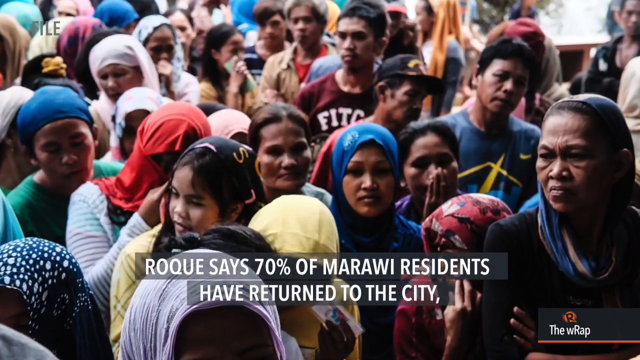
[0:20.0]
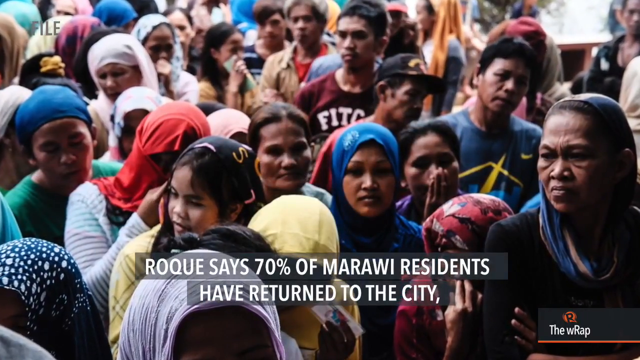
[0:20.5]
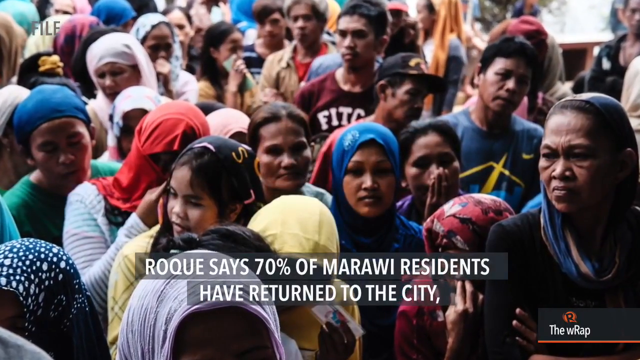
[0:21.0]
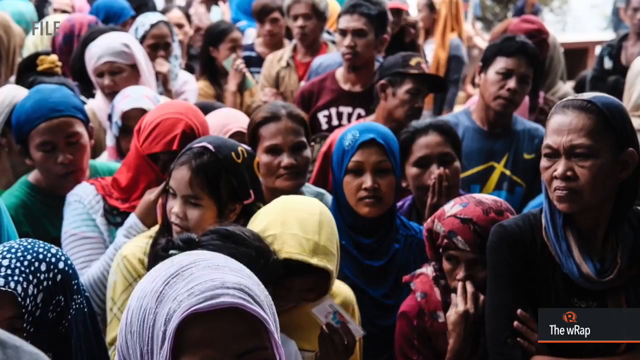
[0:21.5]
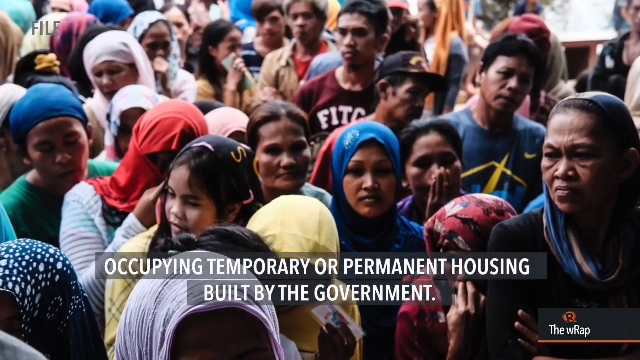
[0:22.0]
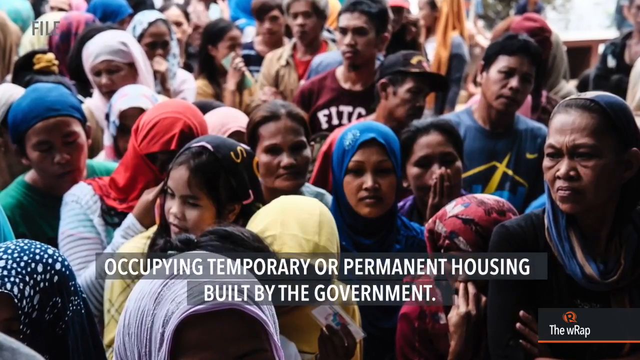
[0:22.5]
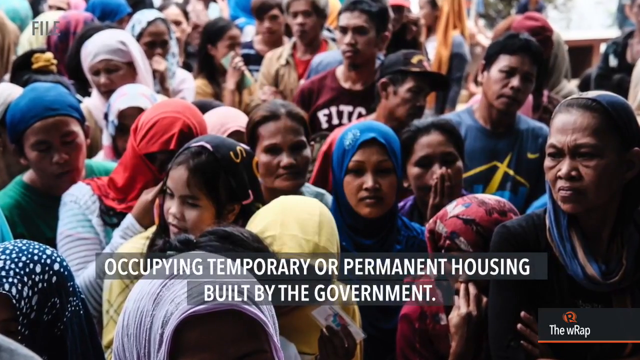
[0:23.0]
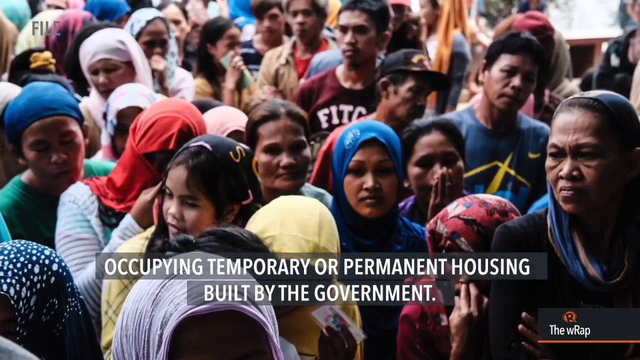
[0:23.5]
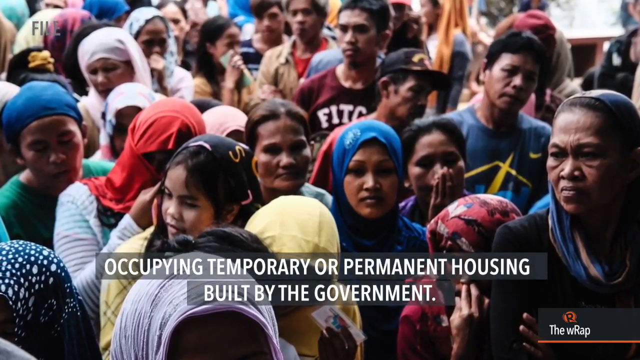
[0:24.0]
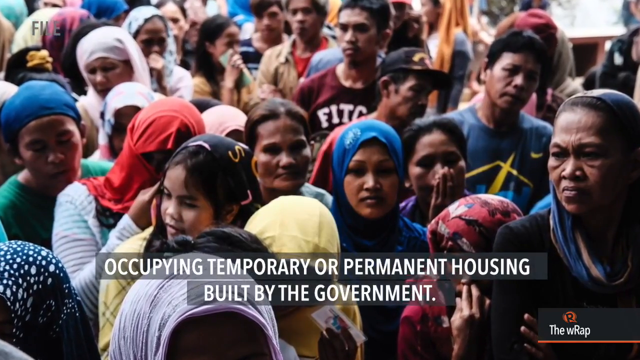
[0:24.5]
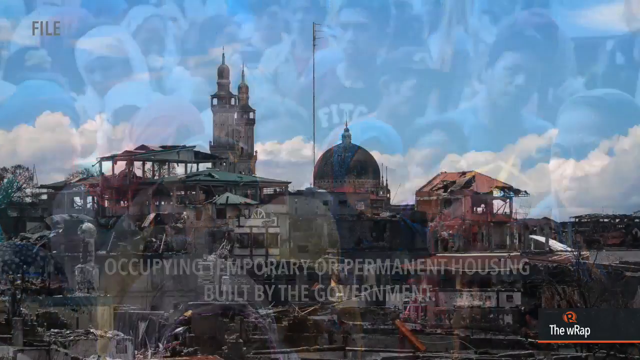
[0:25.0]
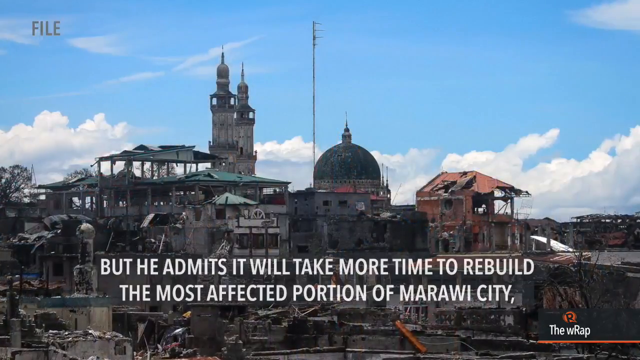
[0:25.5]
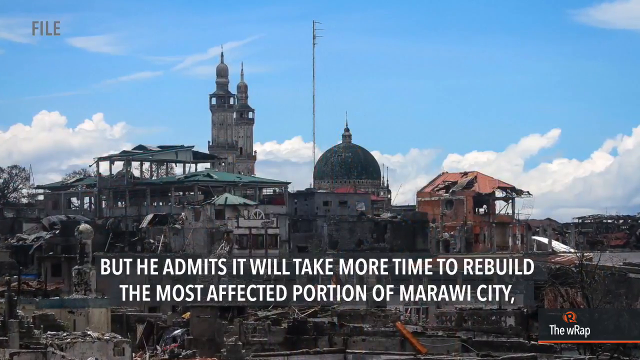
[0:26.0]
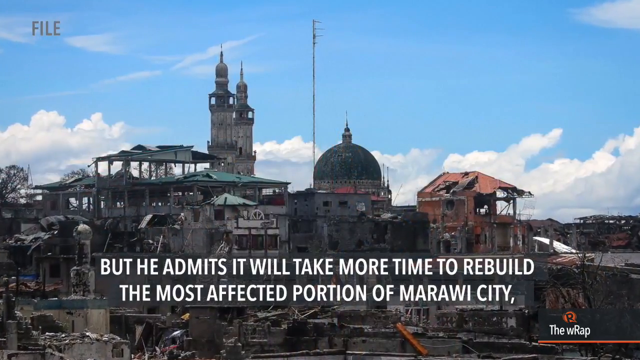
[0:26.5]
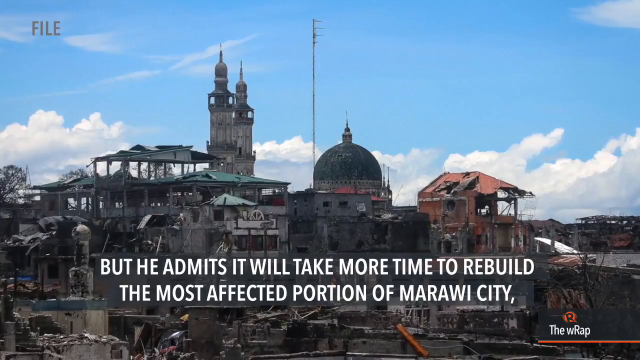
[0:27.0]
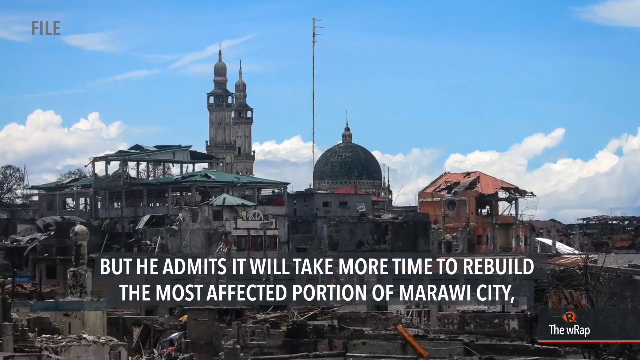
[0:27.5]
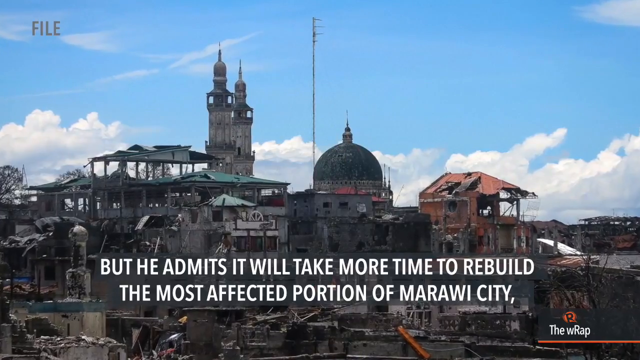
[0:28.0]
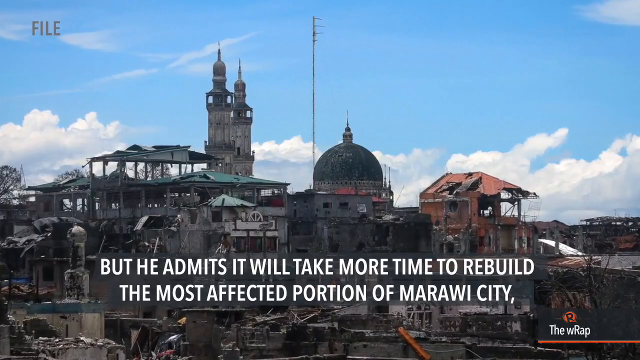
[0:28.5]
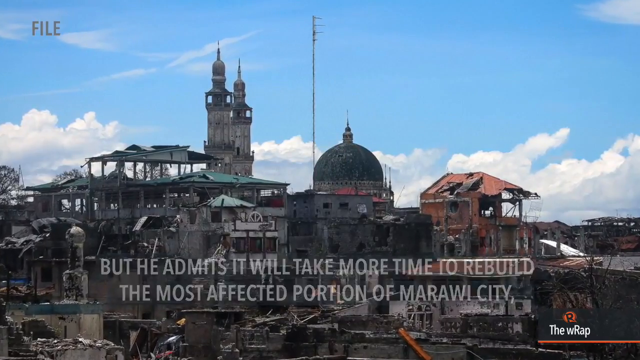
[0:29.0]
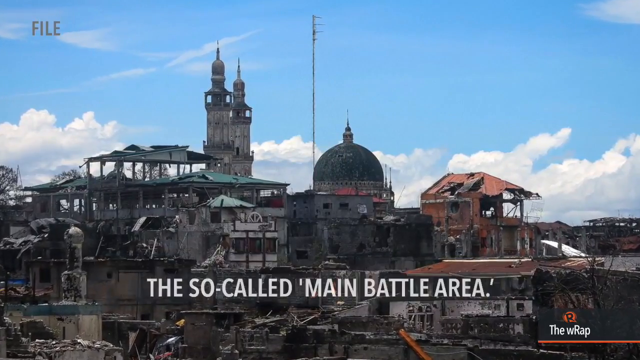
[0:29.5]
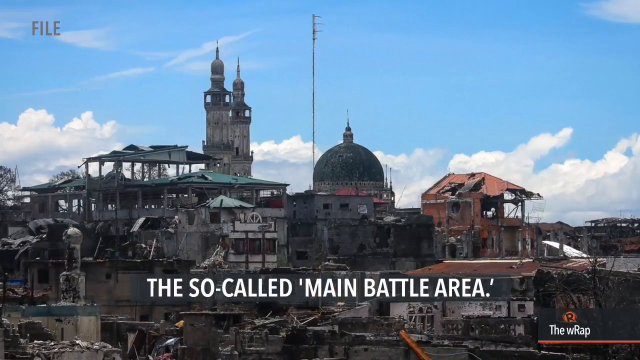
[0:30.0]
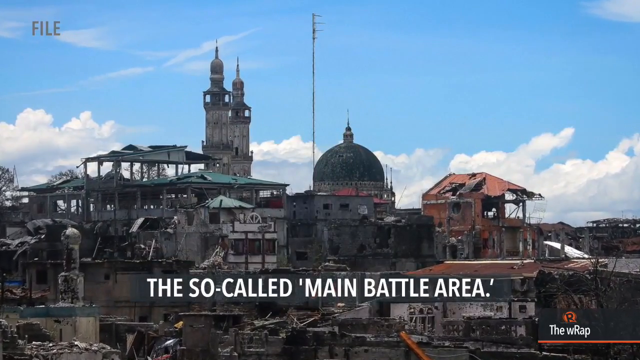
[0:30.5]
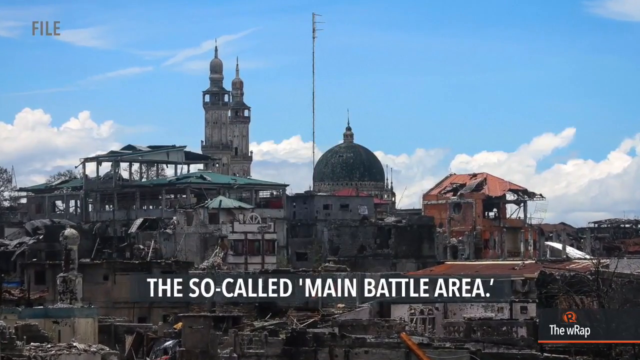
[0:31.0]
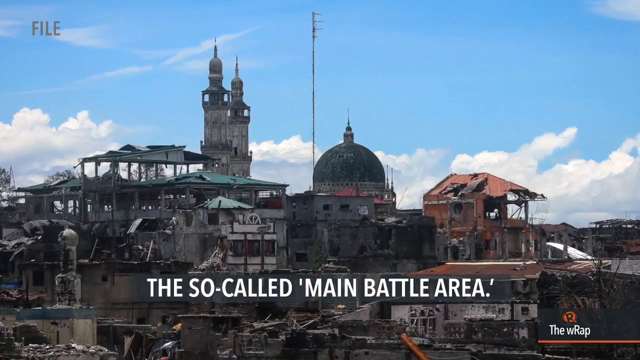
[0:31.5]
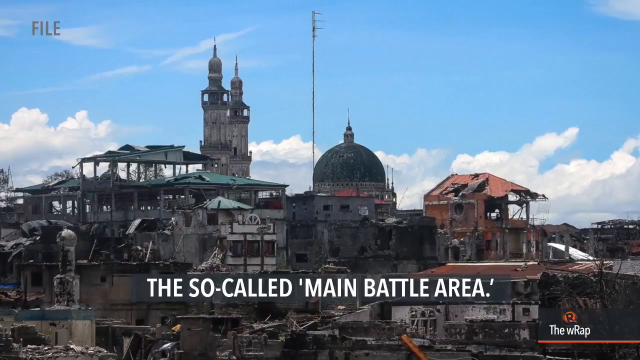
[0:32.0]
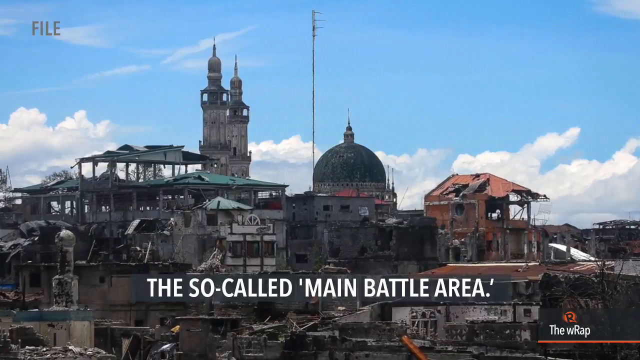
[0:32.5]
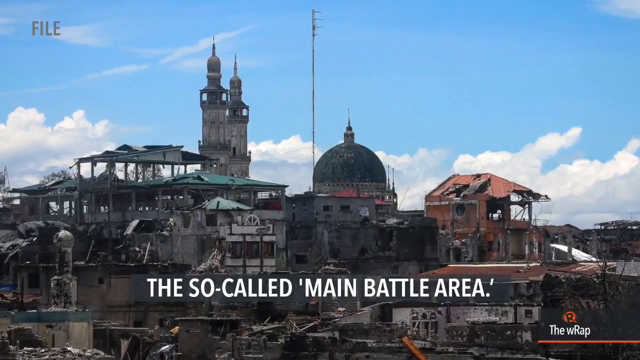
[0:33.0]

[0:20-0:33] Tall buildings and green trees are shown, and the buildings have been burned to ashes. Soldiers wearing camouflage are walking; they look about 50 years old. There are Indians wearing red saris, blue saris and yellow saris, while some of them wear no saris. The industries and the churches are shown burned to ashes. Text on the screen reads "main battle area", an area that was destroyed. A fire is shown, and in the sky there are only a few small white clouds.